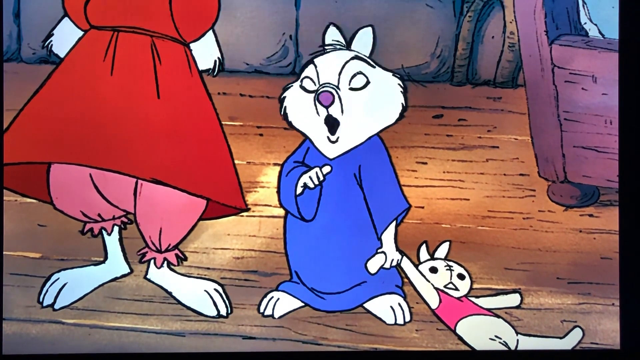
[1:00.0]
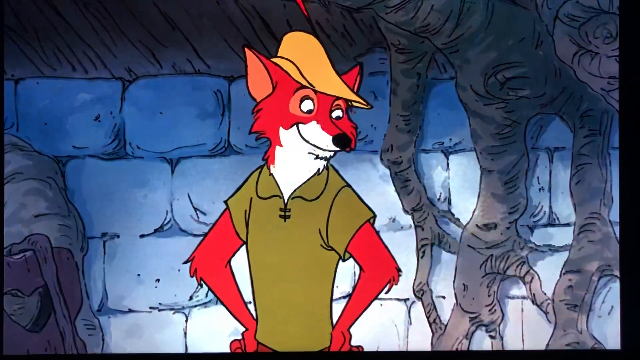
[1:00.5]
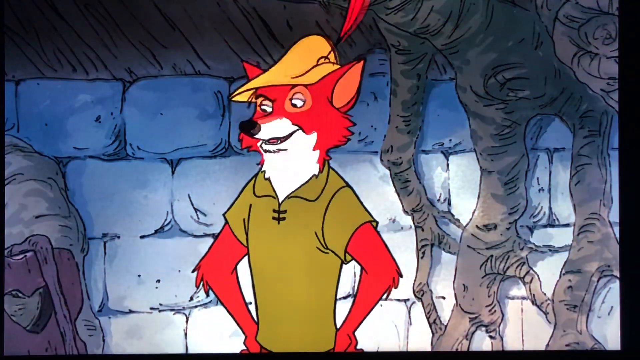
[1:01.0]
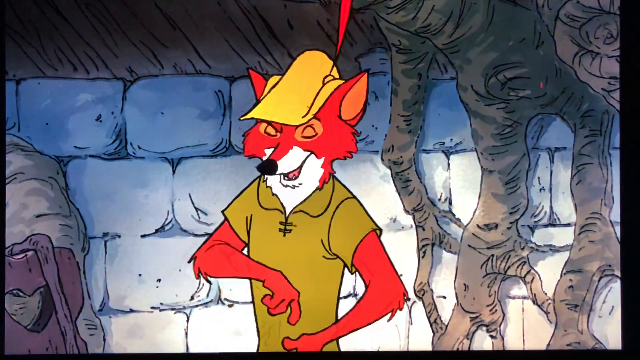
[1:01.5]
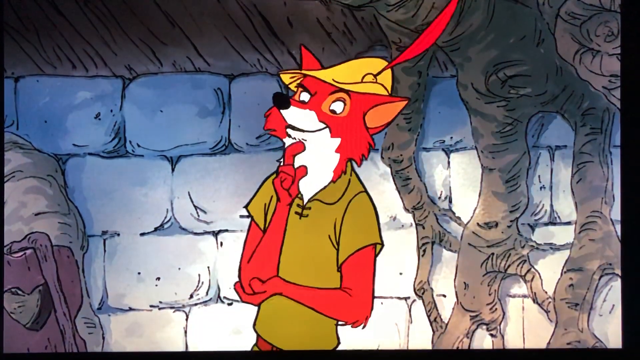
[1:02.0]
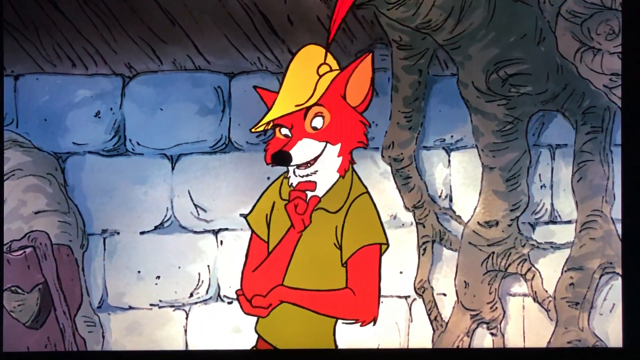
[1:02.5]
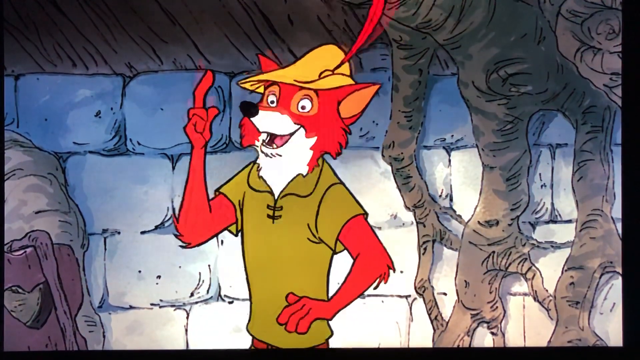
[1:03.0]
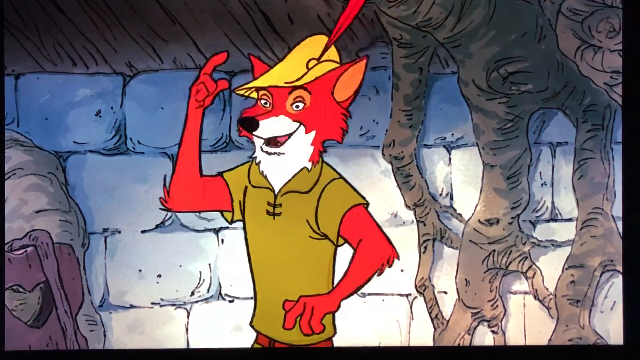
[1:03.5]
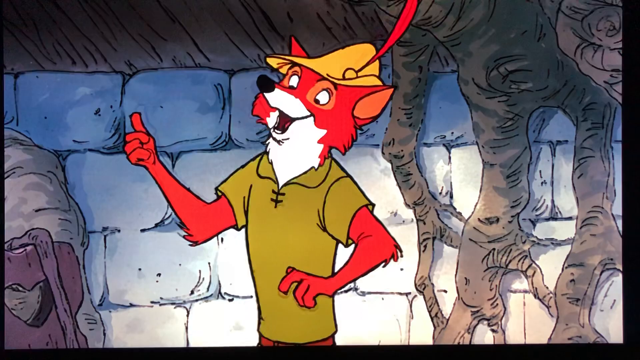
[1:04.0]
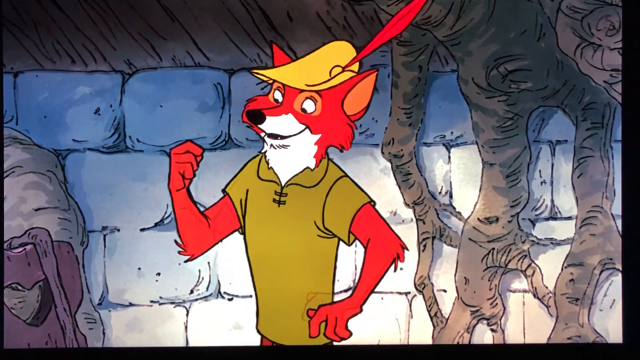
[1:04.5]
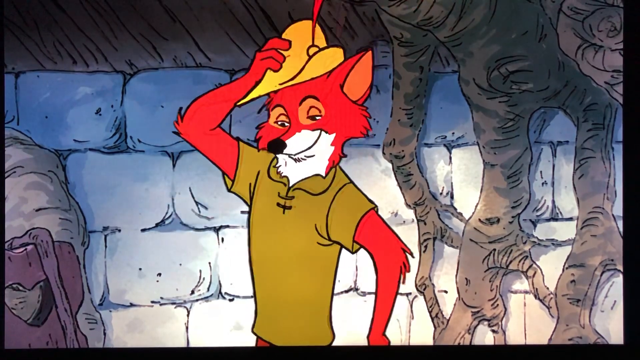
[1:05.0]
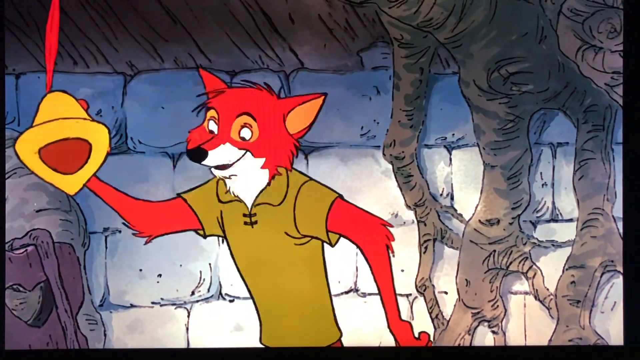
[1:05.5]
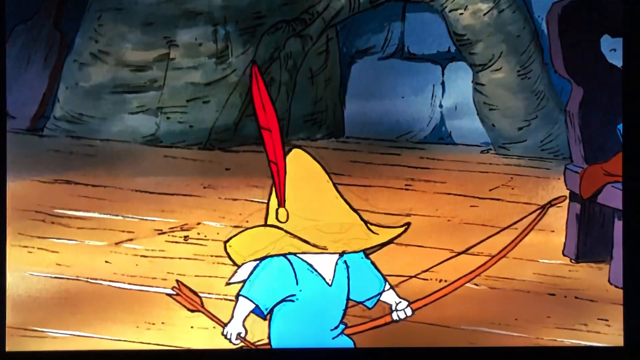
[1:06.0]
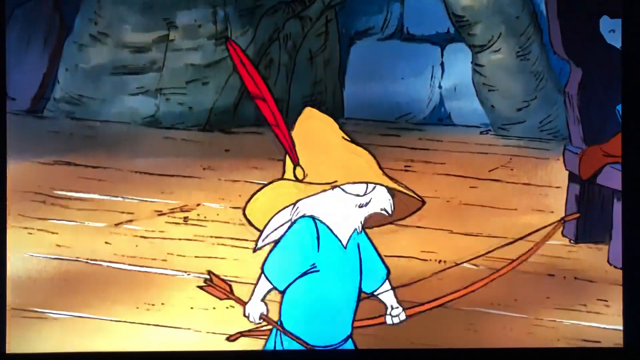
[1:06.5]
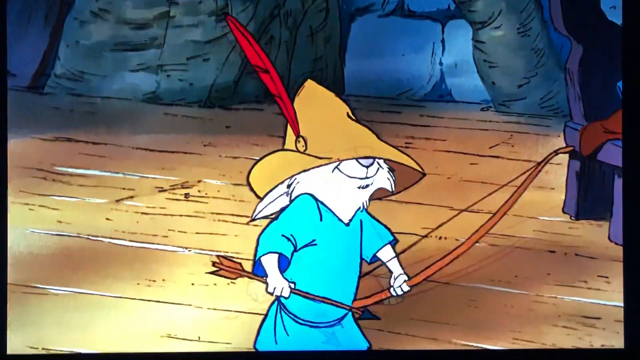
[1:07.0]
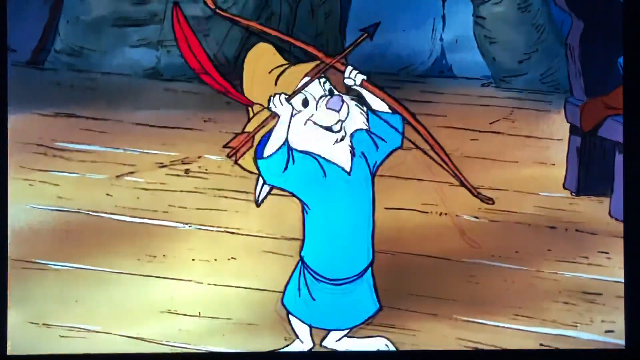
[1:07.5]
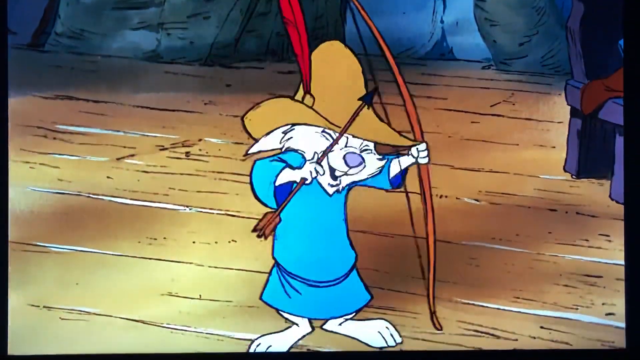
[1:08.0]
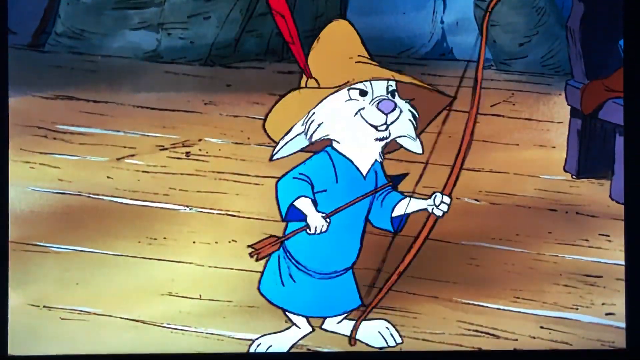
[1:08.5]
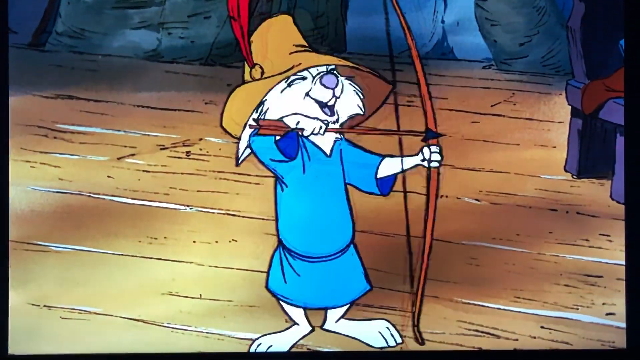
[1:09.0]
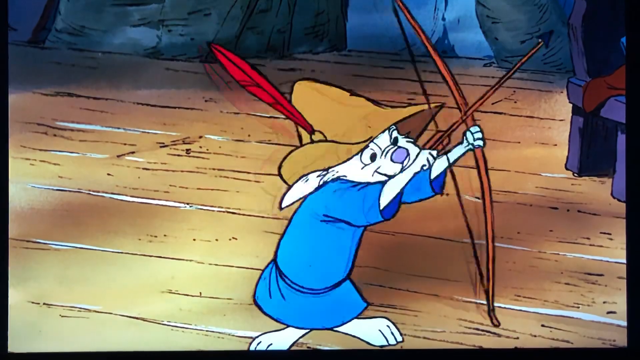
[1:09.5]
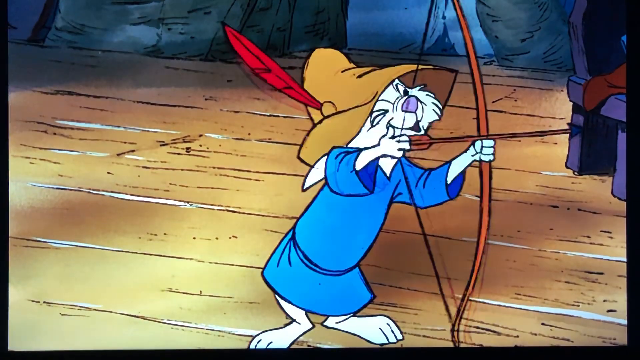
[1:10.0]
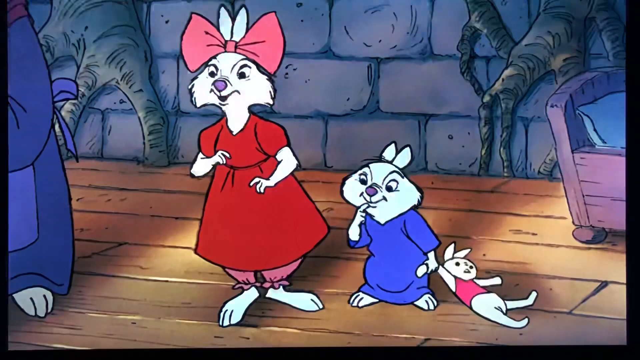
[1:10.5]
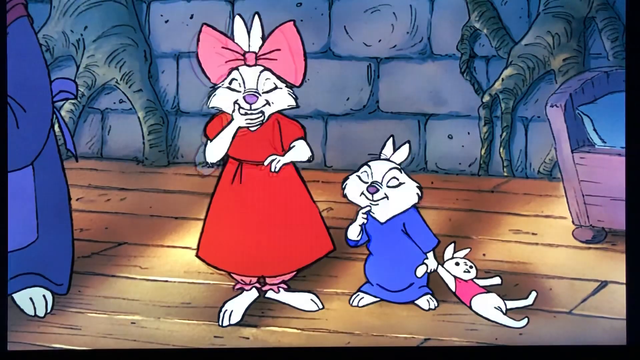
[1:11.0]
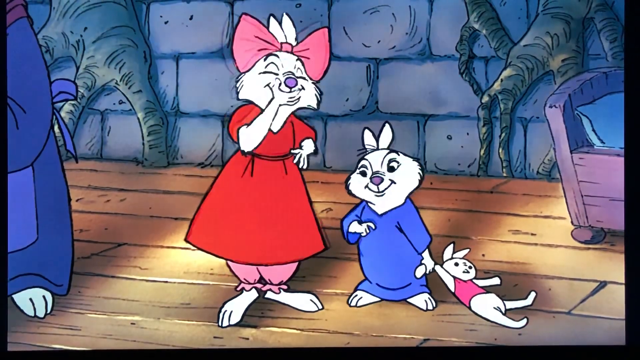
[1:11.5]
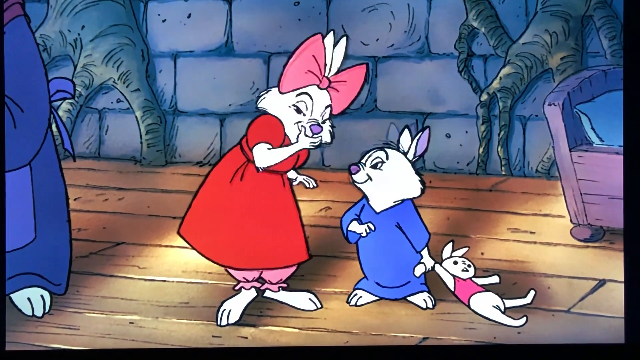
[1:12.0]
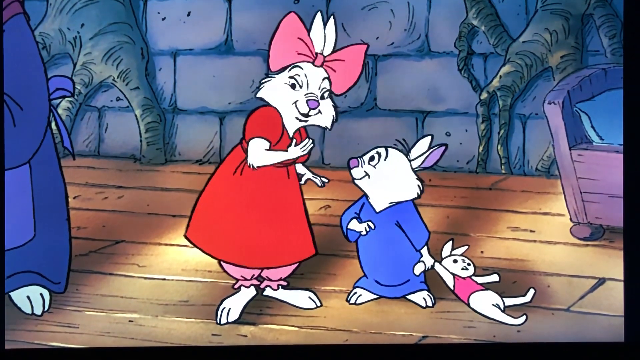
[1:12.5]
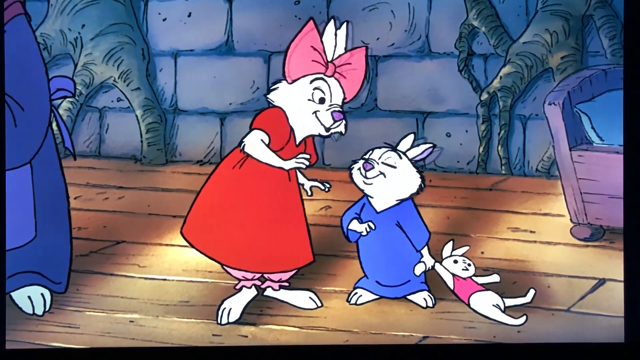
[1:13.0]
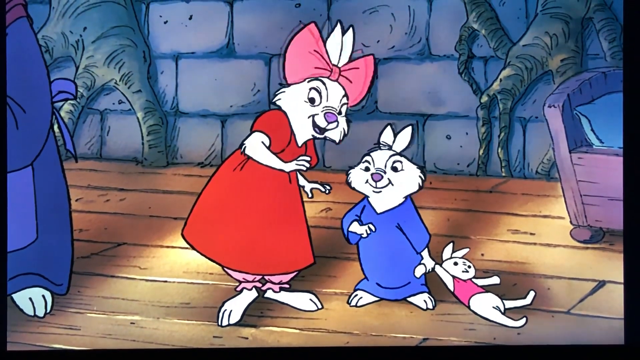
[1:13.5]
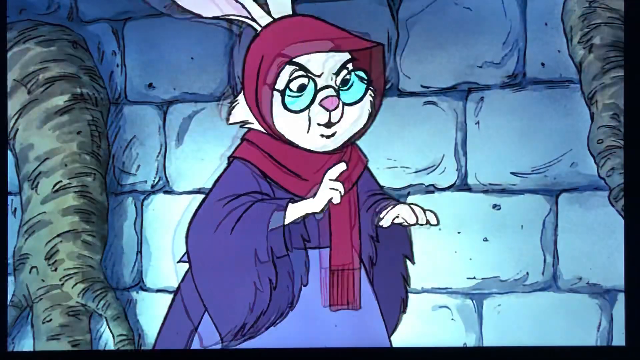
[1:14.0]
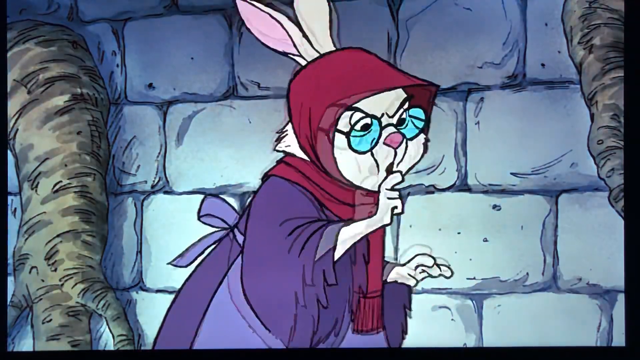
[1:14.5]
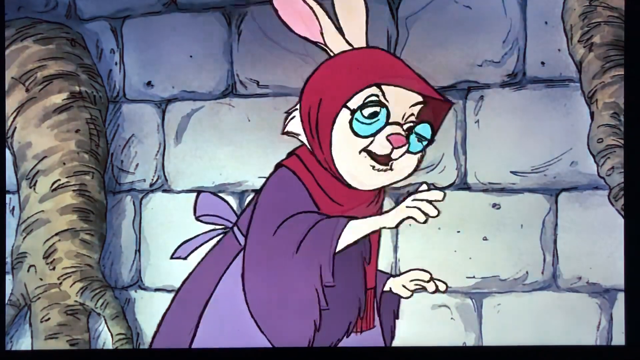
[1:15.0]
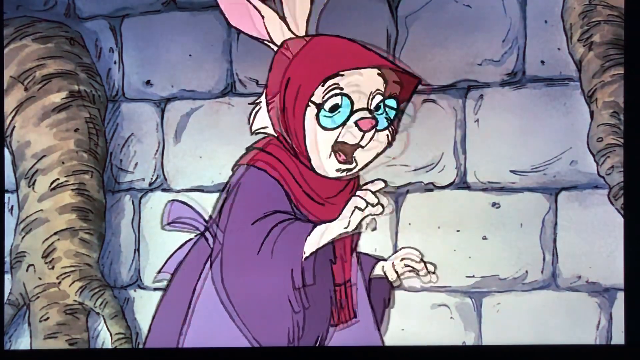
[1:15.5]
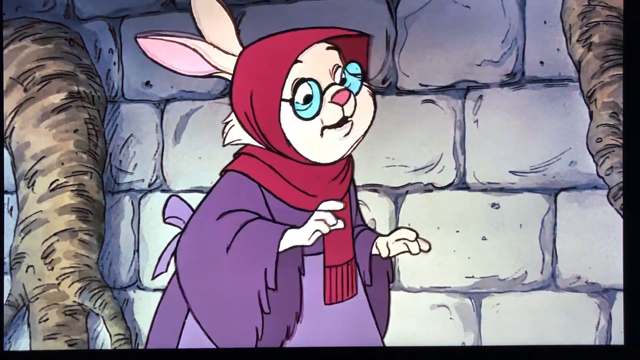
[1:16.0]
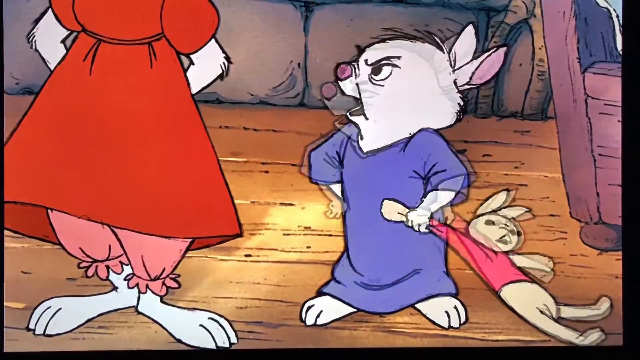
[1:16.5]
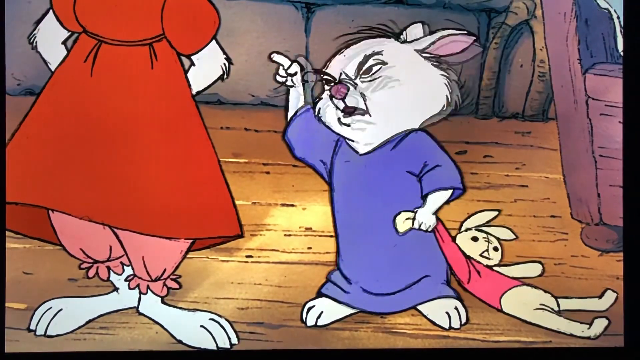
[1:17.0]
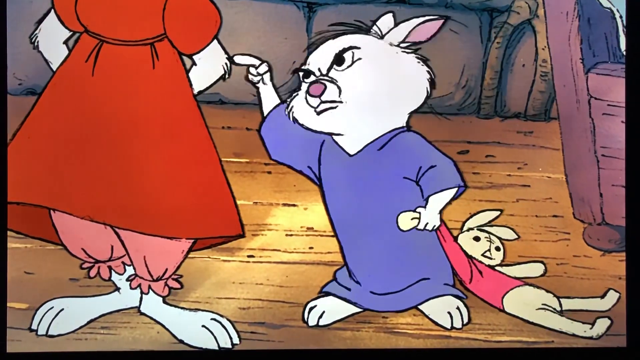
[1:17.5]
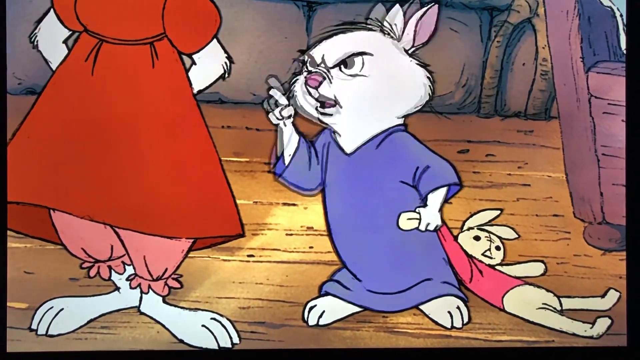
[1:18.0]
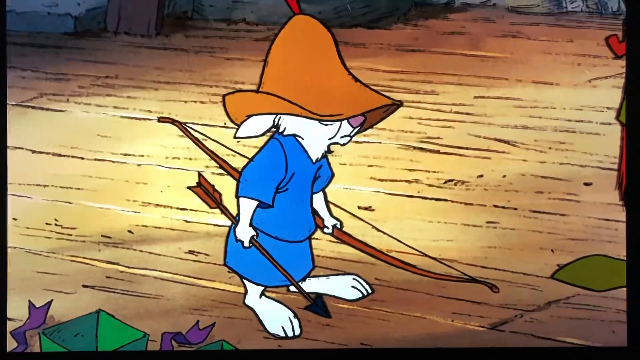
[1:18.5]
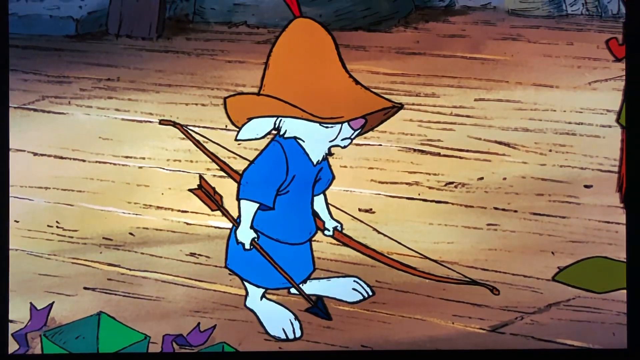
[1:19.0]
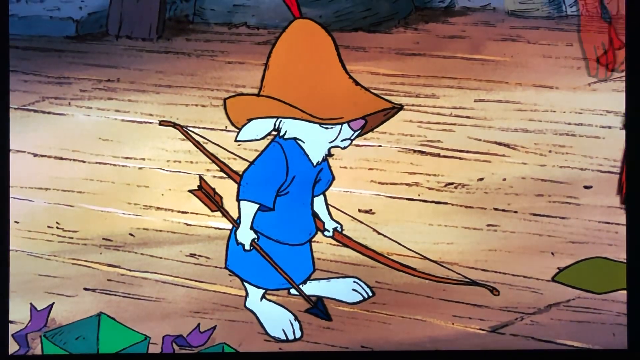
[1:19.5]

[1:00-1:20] Robin Hood gestures that he has an idea by pointing his finger up in the air, then takes his hat and gives it to the rabbit with the bow and arrow, who is very excited to have it. The older sister, next to the little sister who disagreed about the bow and arrow, laughs and whispers something to the little sister, who nods and laughs along with her. The mother is not happy with this behavior; she gestures with her hand and scolds them, while another rabbit protests back to her.